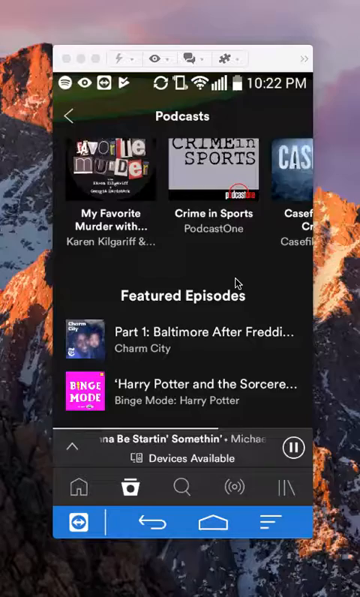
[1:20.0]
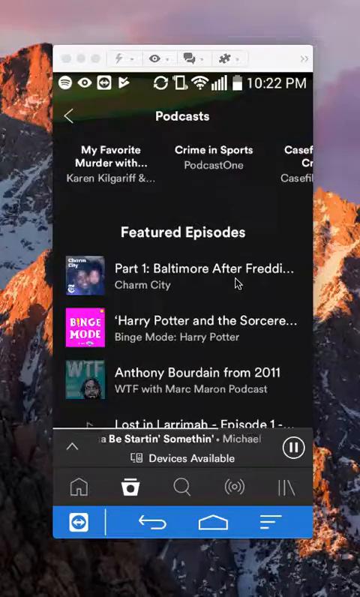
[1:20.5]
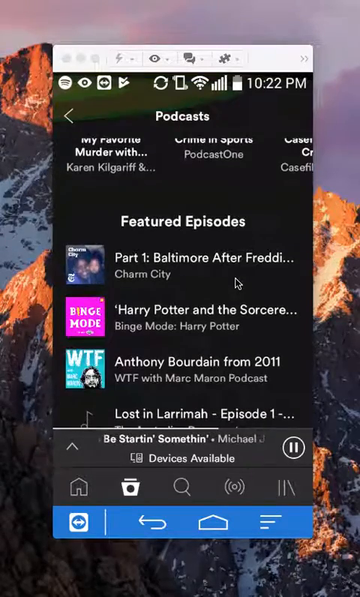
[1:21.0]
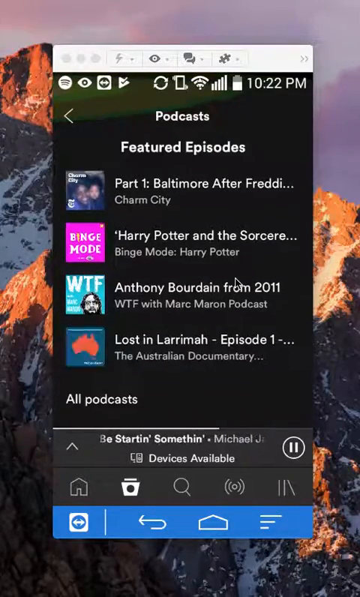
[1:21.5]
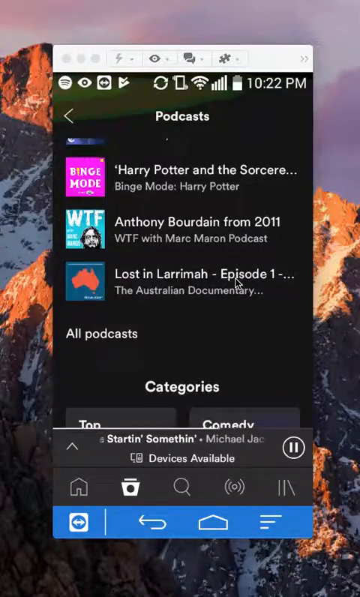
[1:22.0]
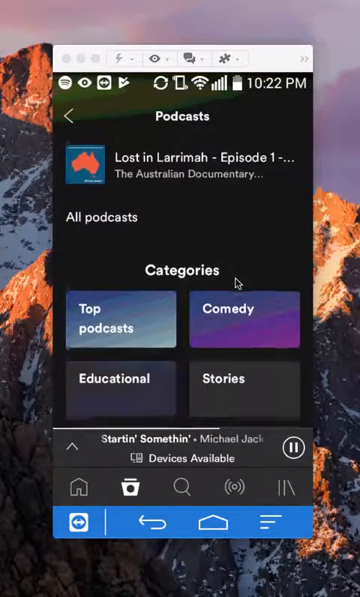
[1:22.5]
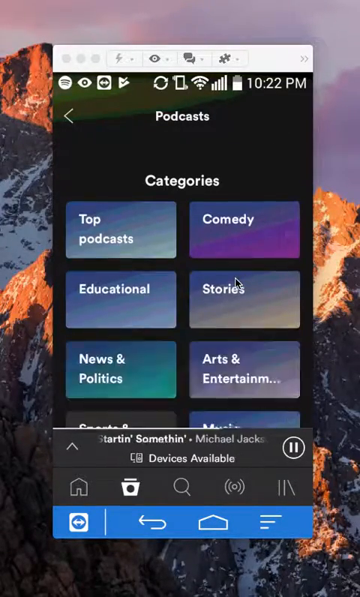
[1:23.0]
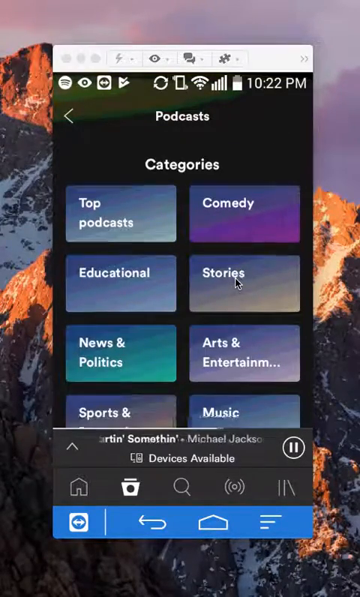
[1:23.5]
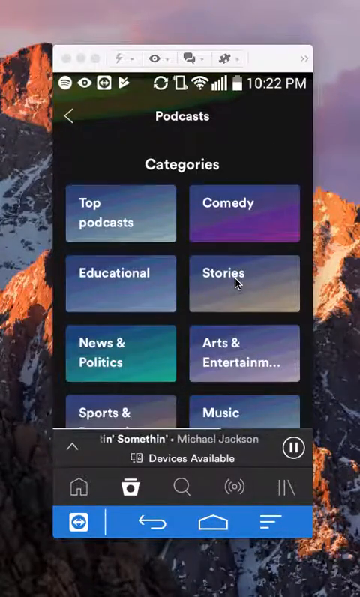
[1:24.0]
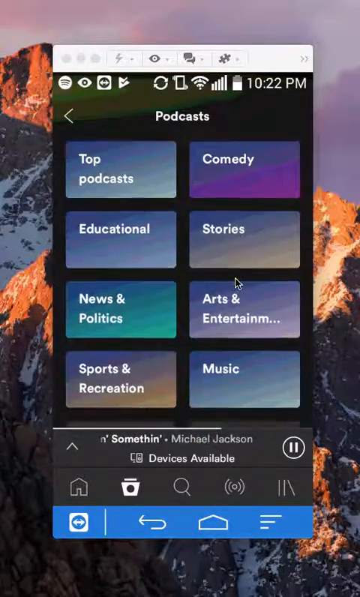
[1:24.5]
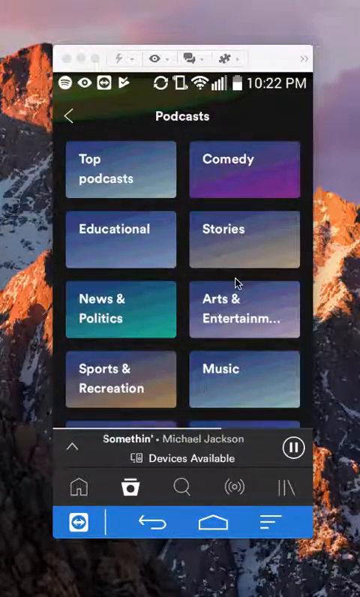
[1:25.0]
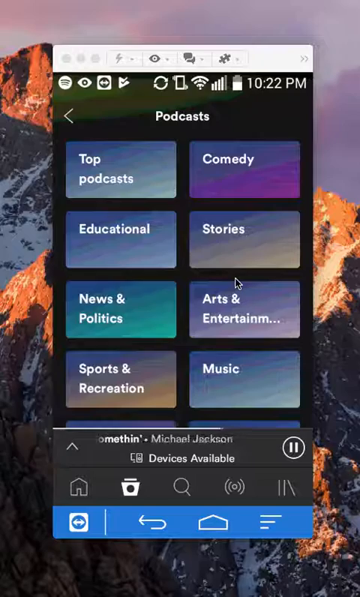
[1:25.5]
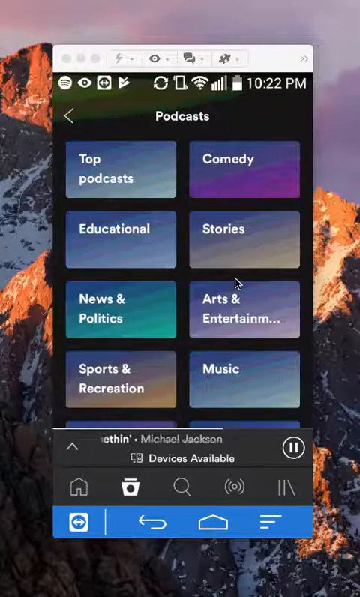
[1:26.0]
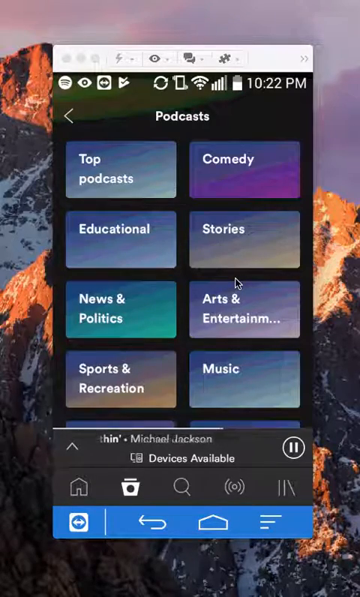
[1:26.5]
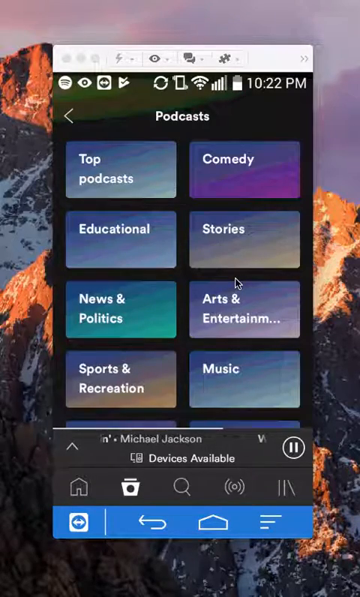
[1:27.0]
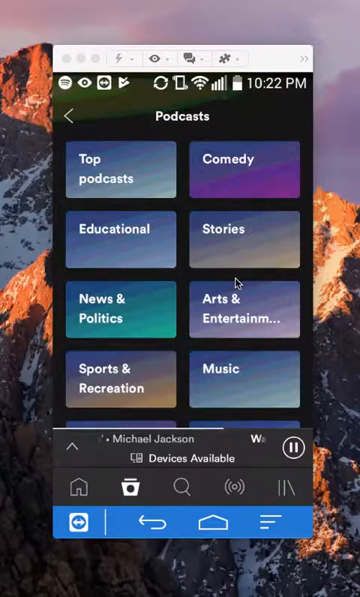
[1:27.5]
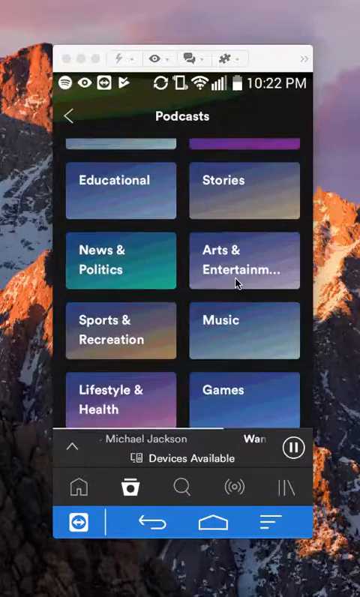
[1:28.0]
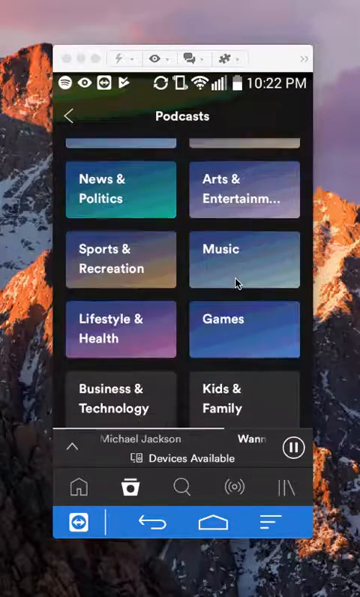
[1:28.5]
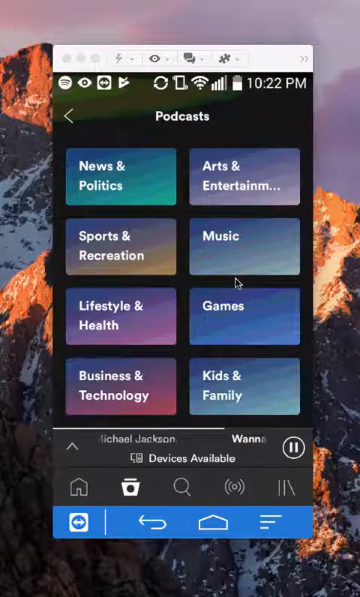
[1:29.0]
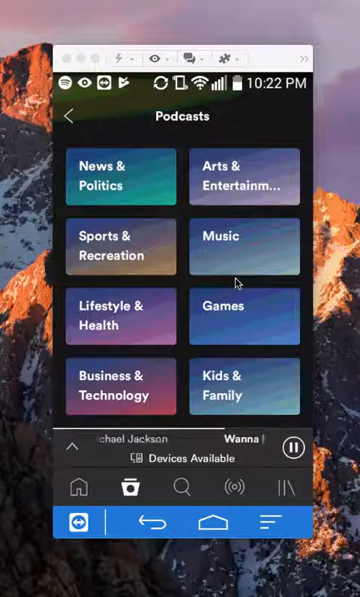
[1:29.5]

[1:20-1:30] A mobile interface for a music application is shown. The top portion has notification icons on the left side and the phone's connectivity, battery and time icons on the right side. Underneath, the app interface is split into two main content areas: a podcast show carousel at the very top and a featured episodes list beneath it. The carousel shows podcasts for My Favorite Murderer, Crime and Sports, and a third with the title Blocked. The featured episodes list below shows Part 1, Baltimore After Freddy from Charm City; Harry Potter and the Sorcerer's... from Benchmode Harry Potter; and Anthony Bourdain from 2011. The view scrolls down to the bottom section of the app, showing the podcast categories, split into two columns with five options under each.